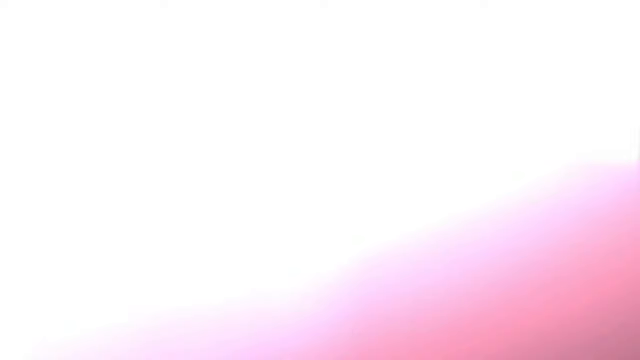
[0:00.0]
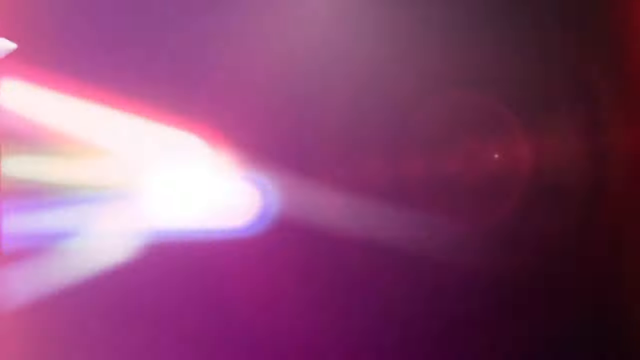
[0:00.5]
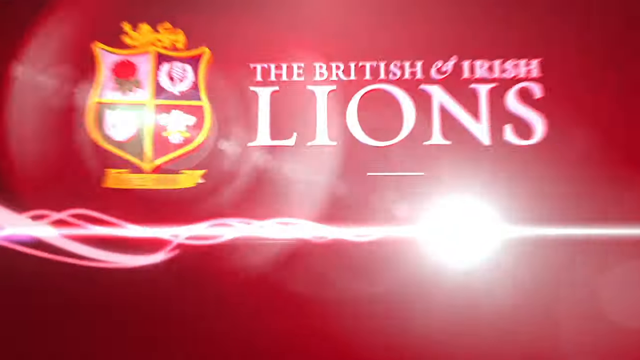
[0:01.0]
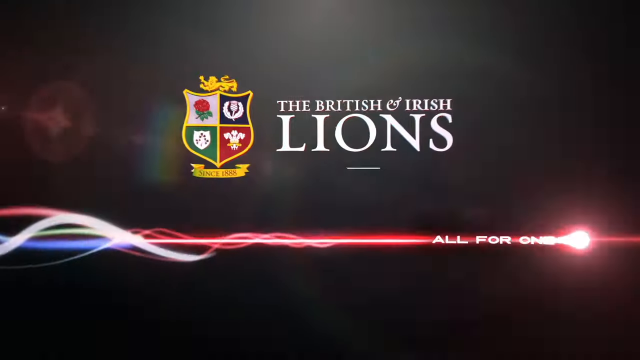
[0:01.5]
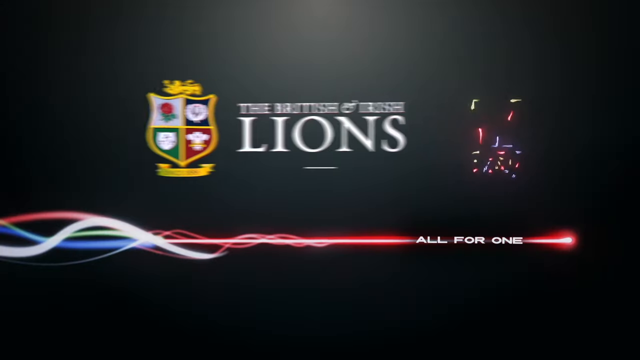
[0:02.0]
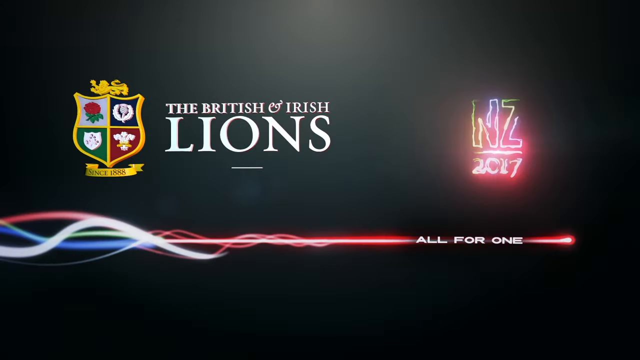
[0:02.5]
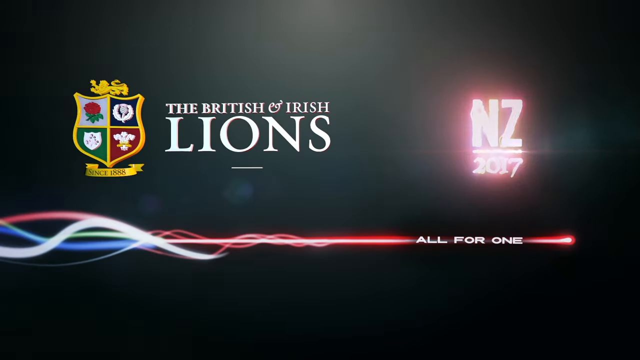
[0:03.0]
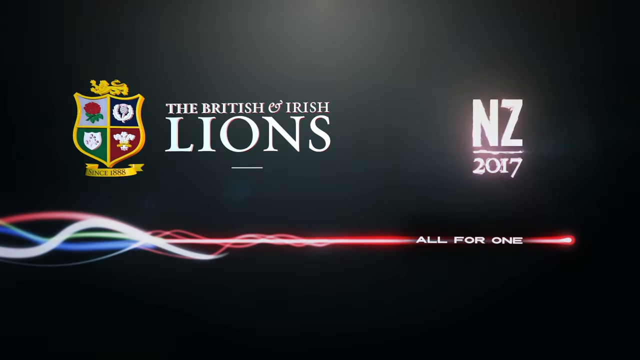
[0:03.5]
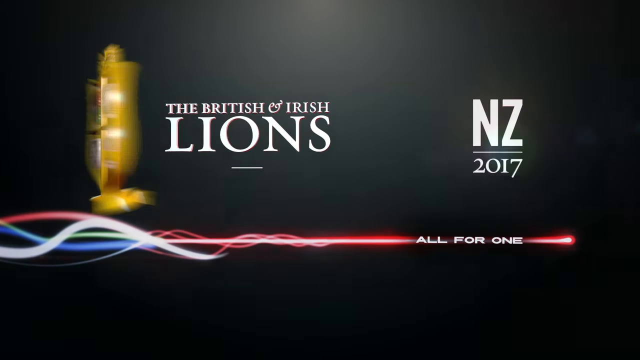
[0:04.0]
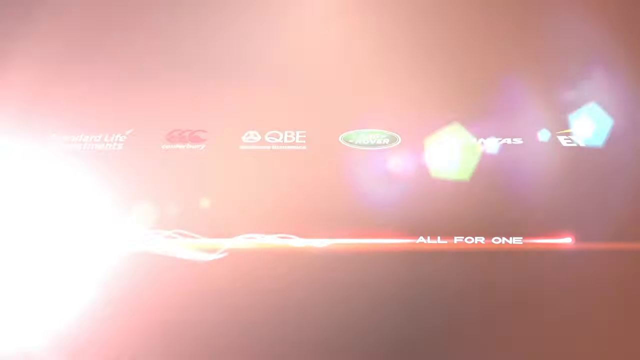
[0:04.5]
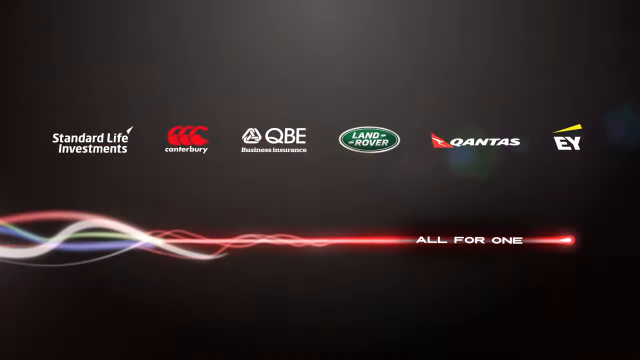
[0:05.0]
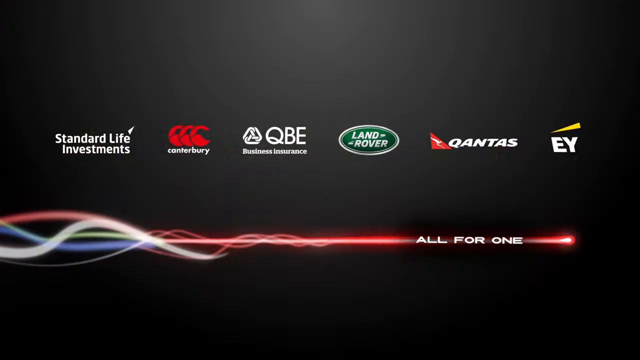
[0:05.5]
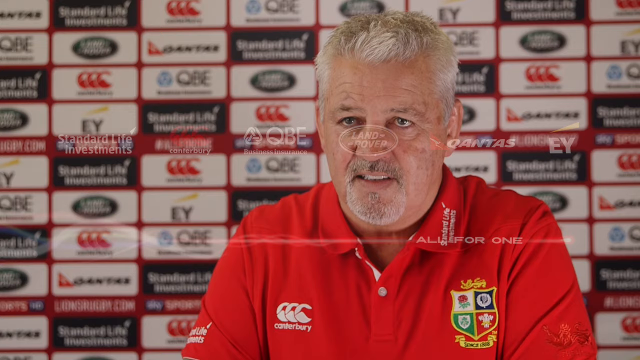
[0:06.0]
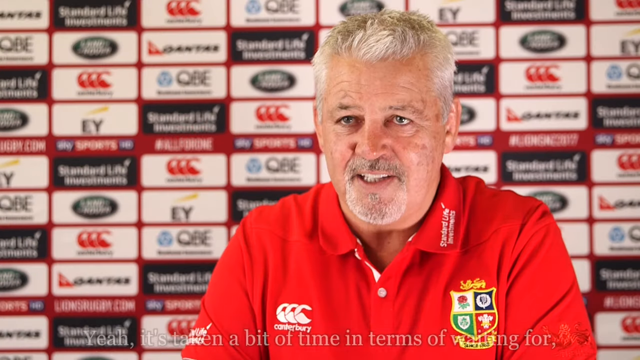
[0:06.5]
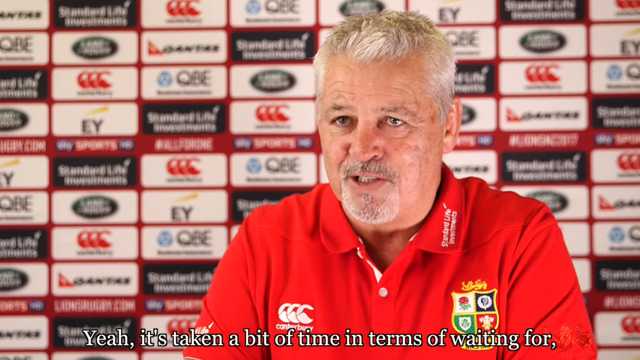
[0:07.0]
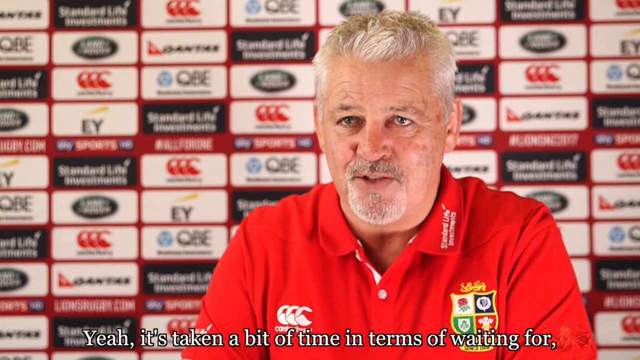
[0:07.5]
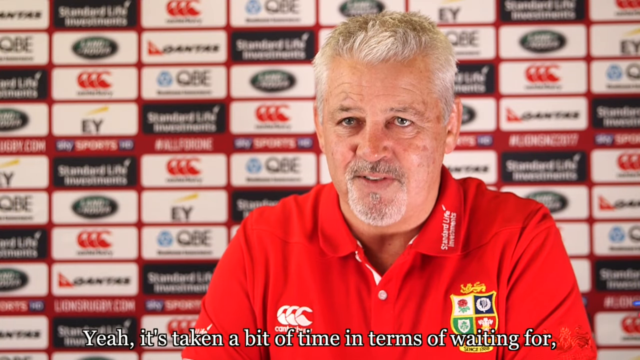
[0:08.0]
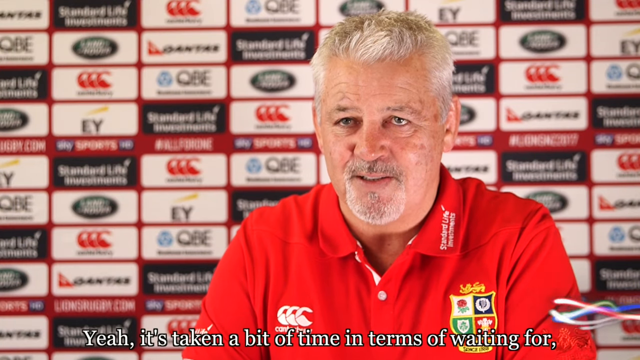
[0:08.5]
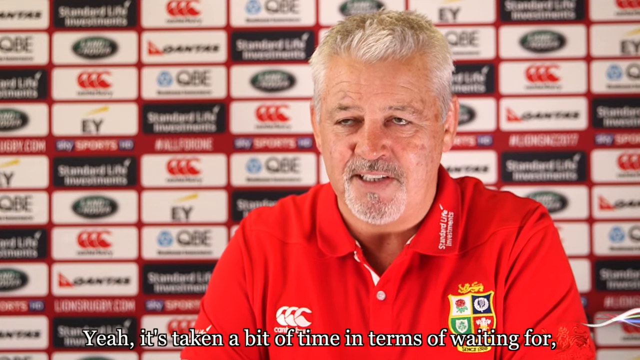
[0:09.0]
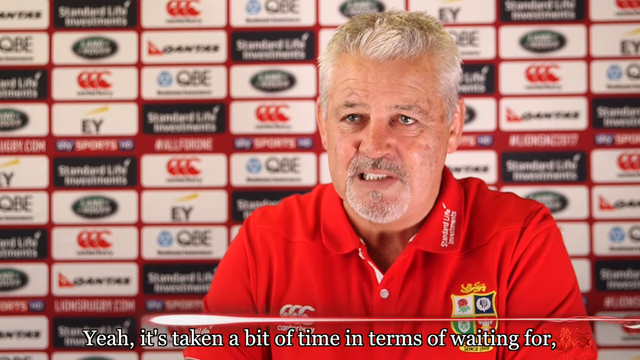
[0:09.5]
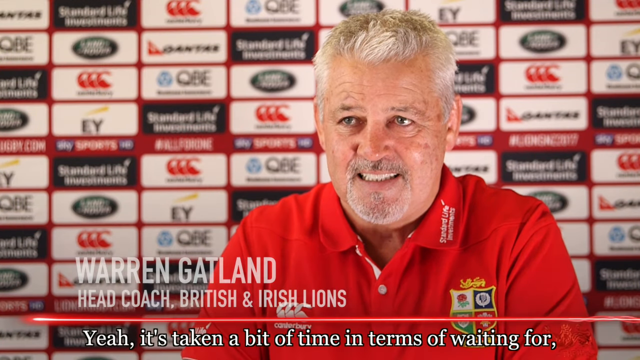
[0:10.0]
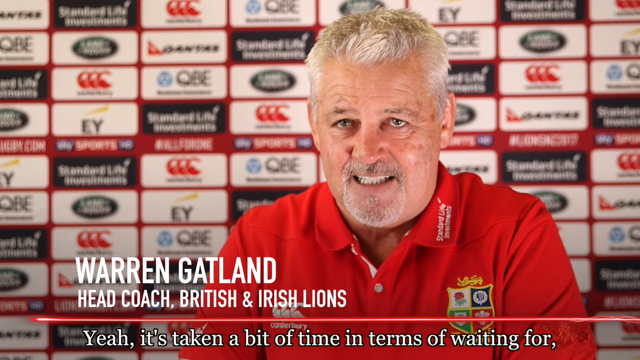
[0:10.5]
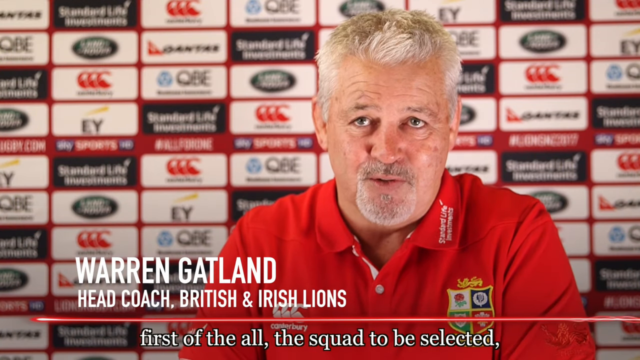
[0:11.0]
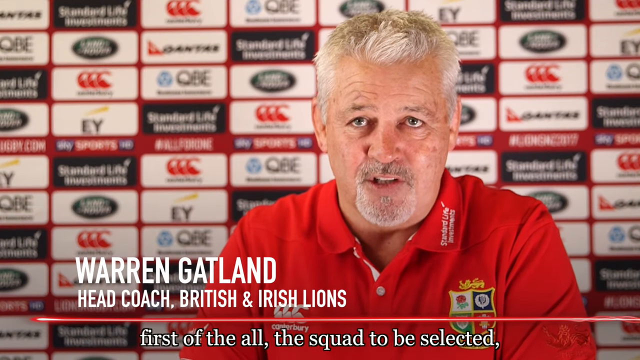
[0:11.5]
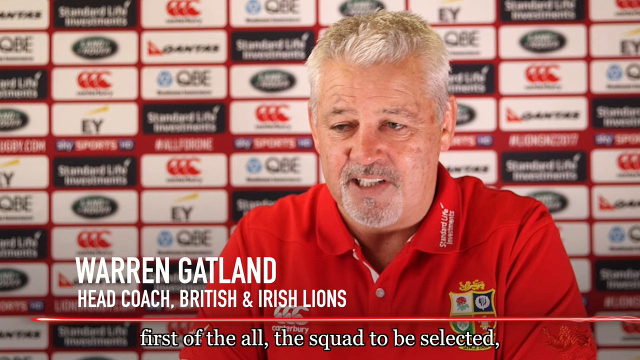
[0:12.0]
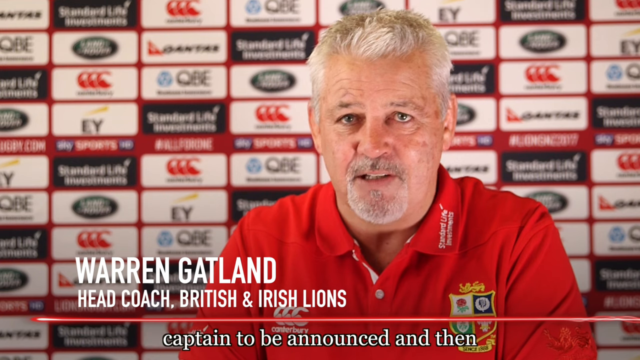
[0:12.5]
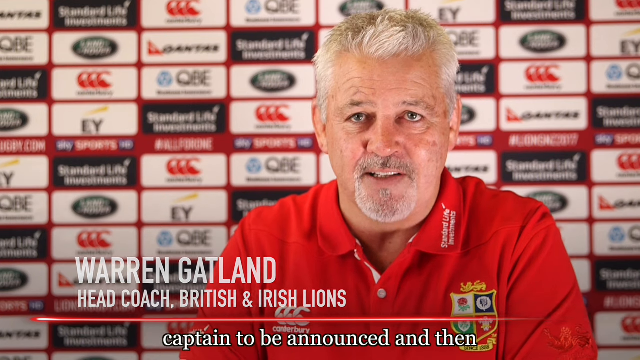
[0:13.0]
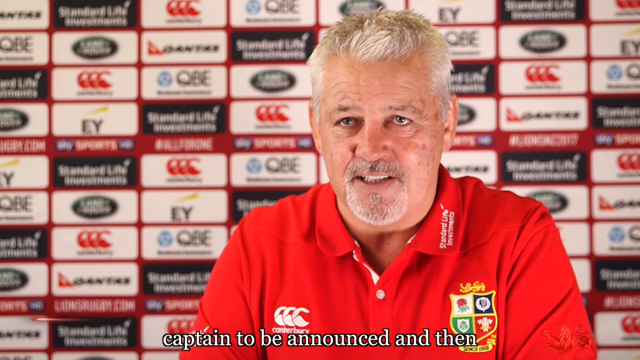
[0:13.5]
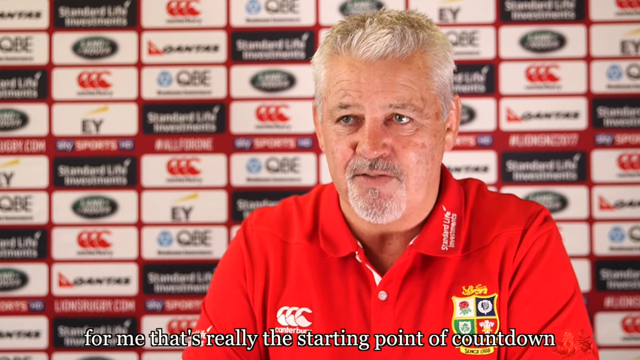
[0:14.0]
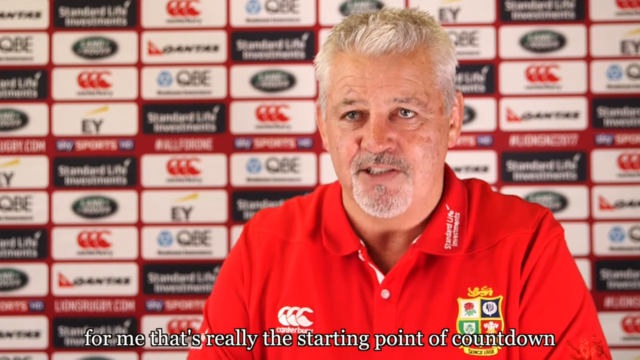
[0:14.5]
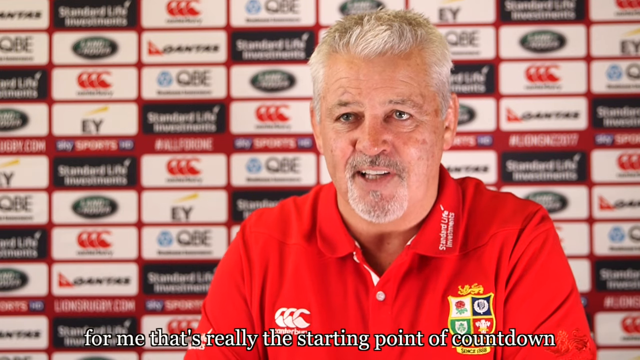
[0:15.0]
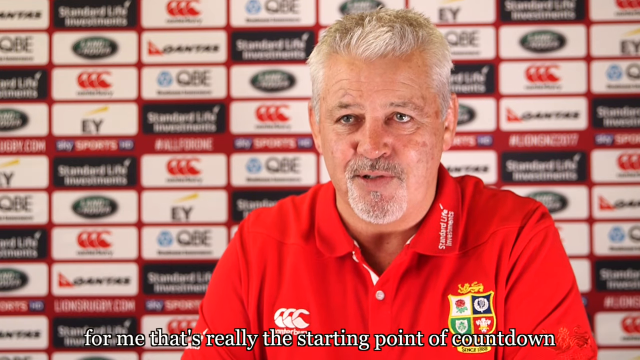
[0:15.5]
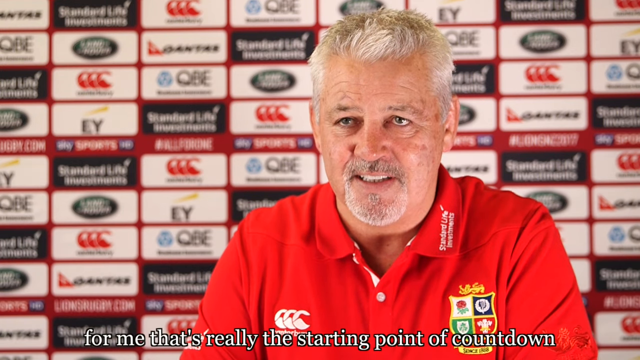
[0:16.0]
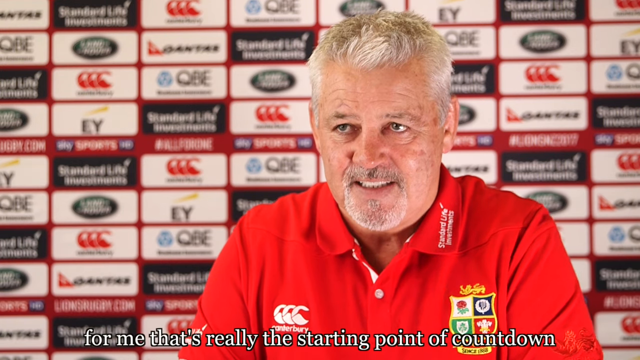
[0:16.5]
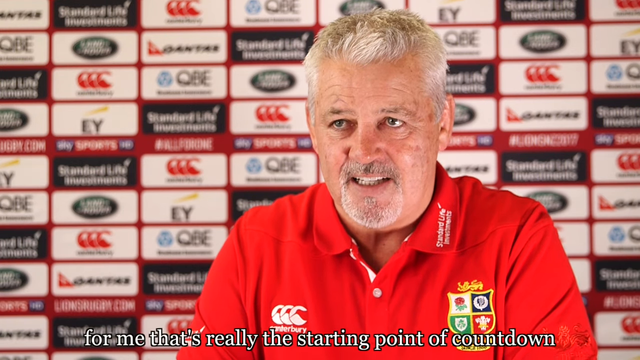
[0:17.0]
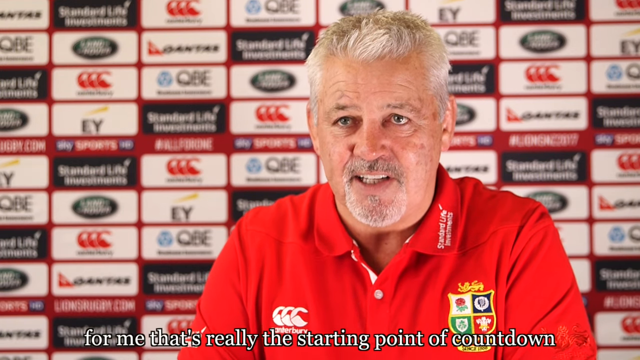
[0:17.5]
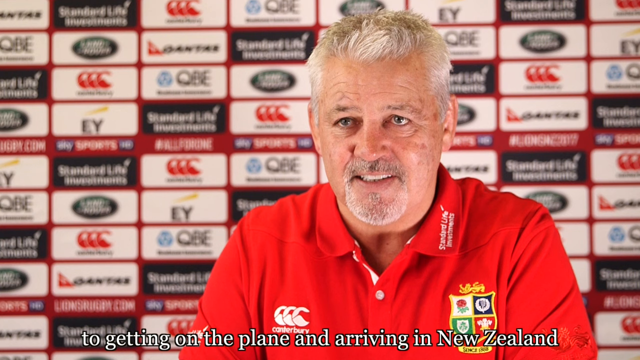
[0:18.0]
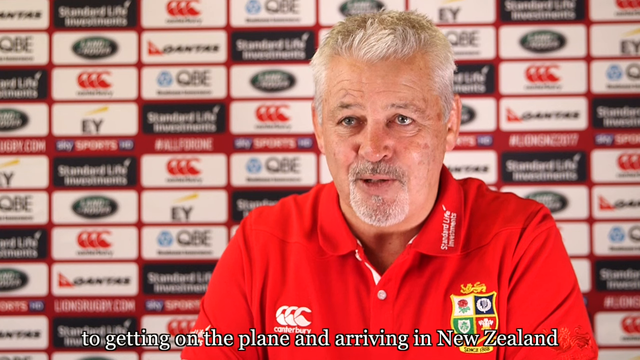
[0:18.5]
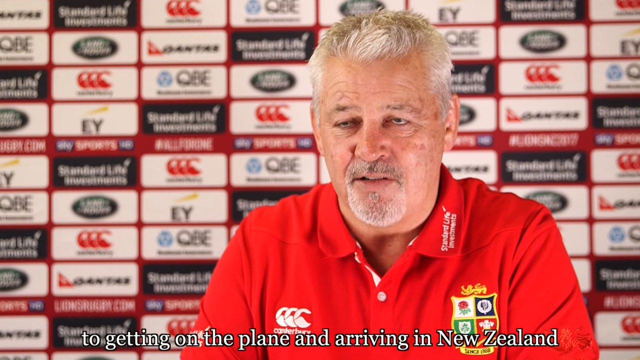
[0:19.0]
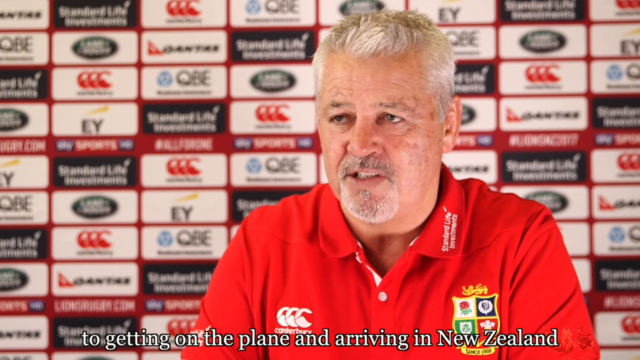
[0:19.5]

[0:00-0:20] A single man who looks to be in his late 50s appears at what seems to be a sports event. He looks like a coach, a middle-aged man apparently speaking on behalf of his team. The setting does not change. The team shown is apparently the British and something Lions.